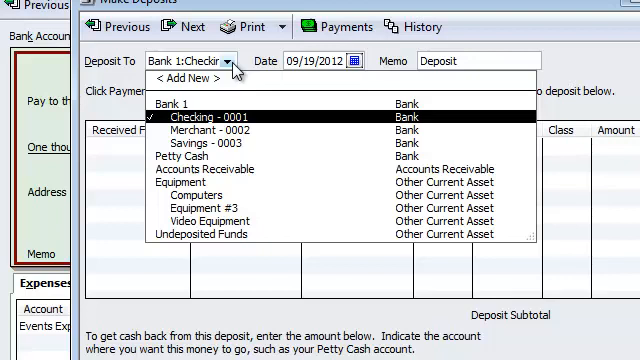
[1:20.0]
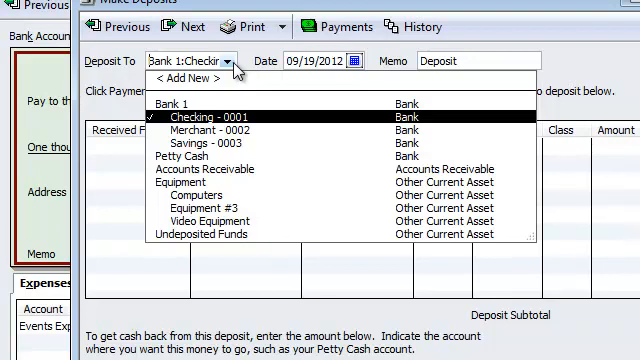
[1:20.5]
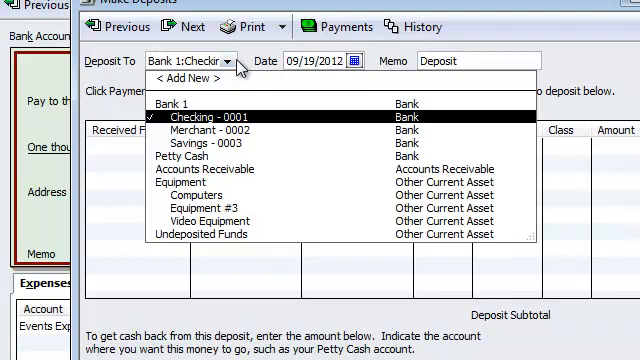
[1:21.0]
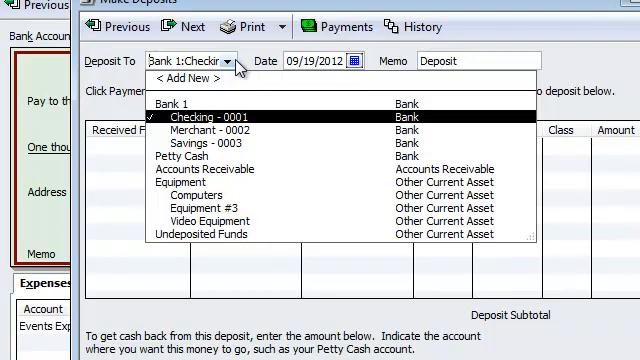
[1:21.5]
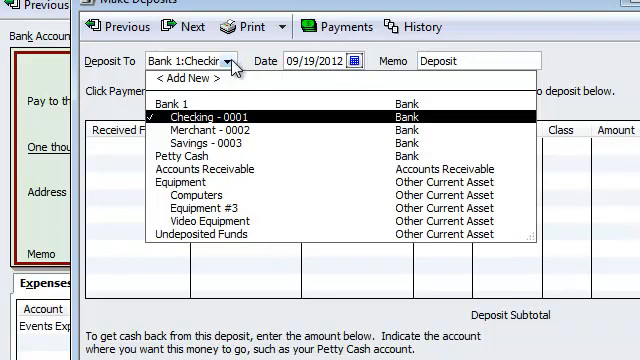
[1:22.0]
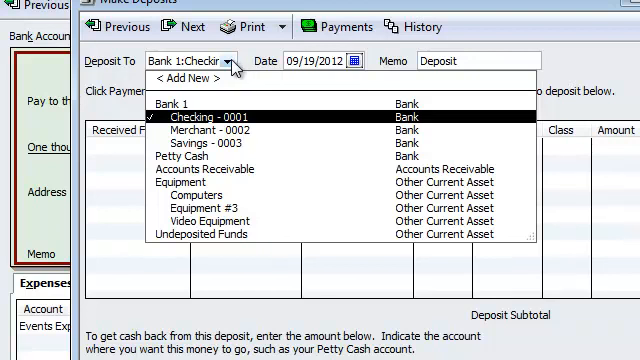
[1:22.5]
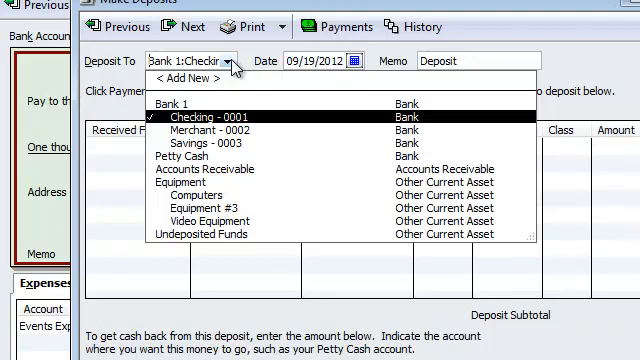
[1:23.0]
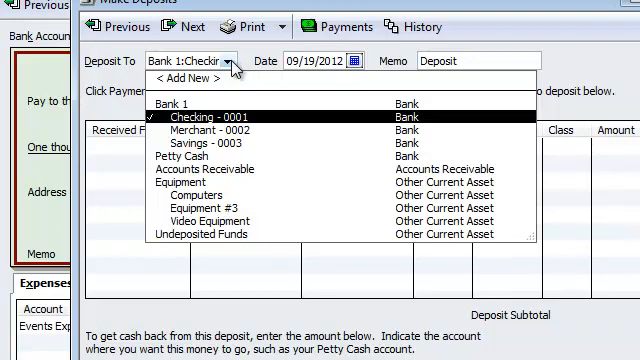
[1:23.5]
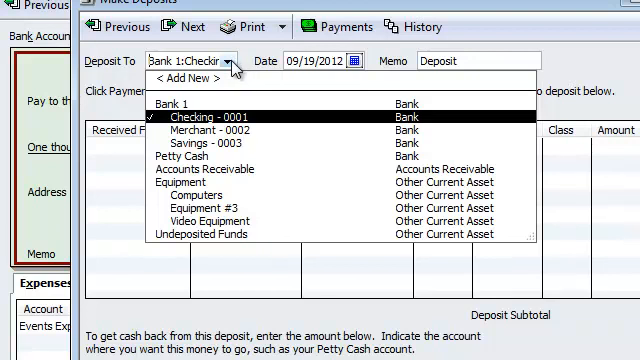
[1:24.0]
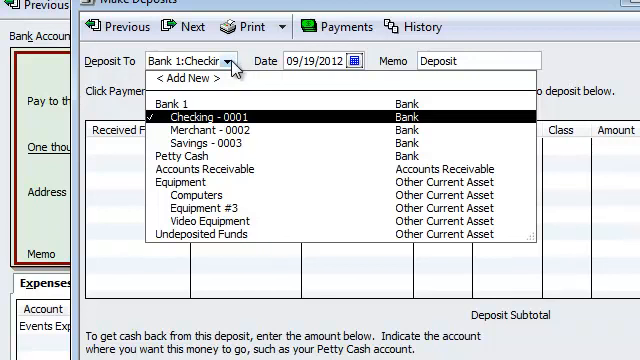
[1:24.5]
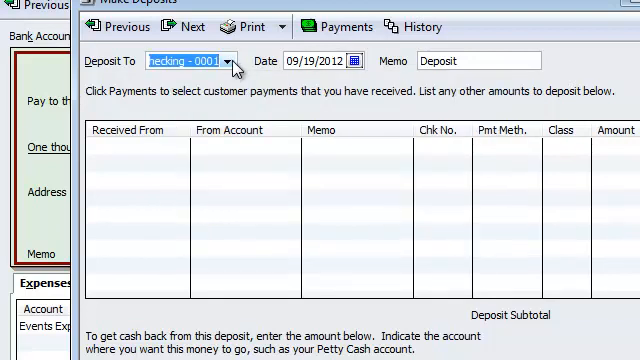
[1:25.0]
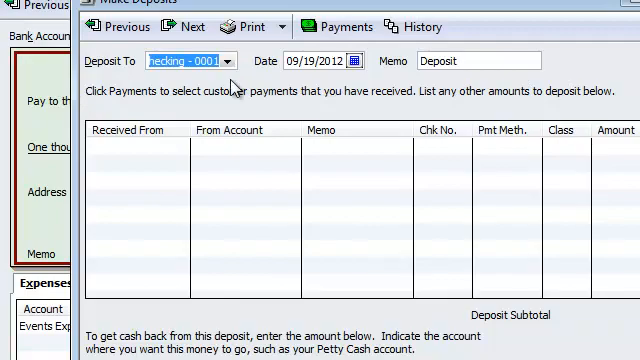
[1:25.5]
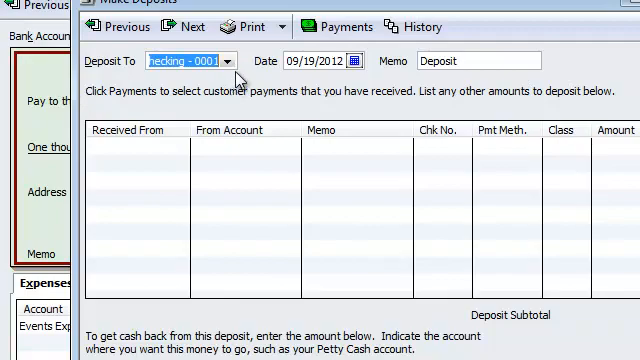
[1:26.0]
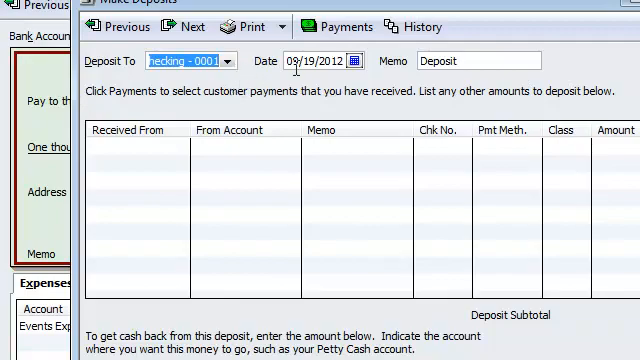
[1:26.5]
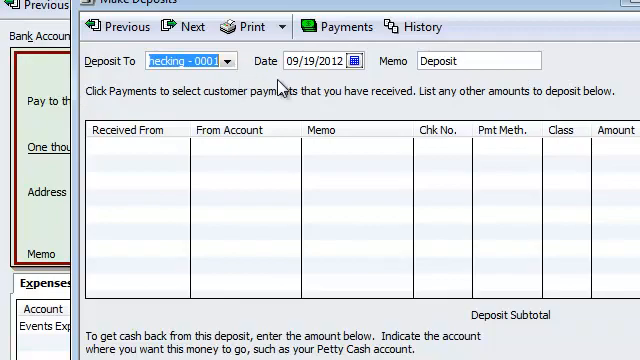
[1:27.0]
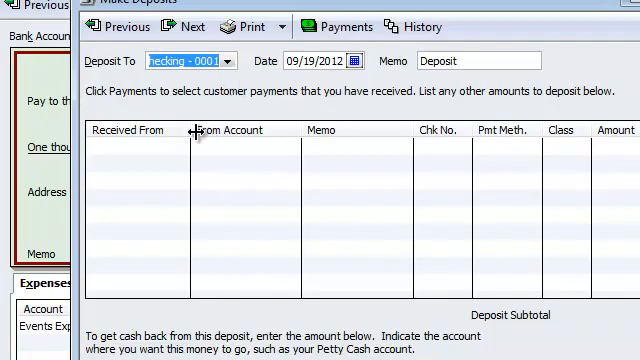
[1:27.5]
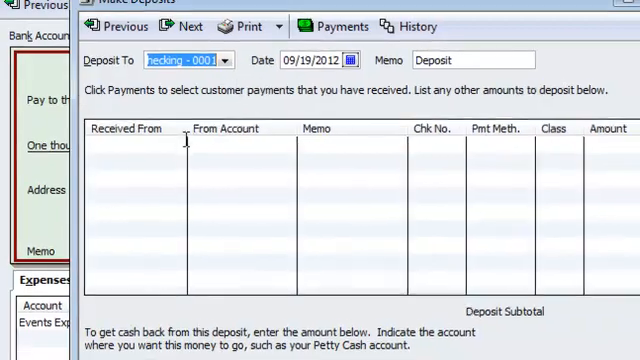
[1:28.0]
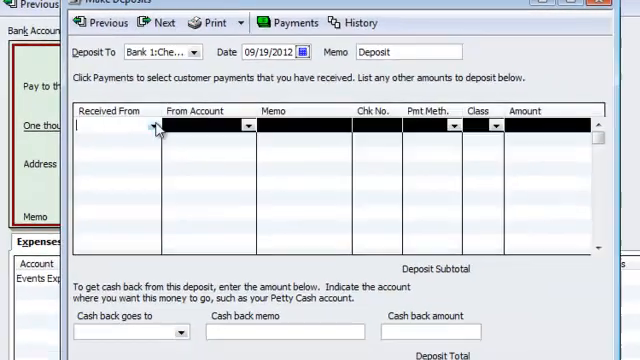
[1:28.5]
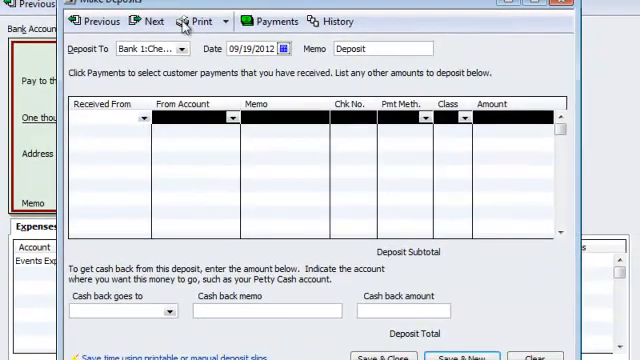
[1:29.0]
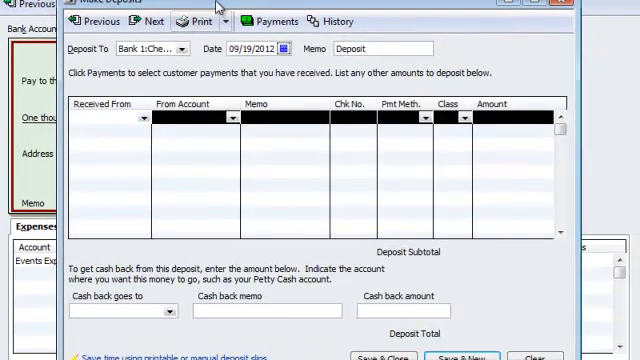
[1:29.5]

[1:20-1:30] In the Make Deposits tab, the user chooses Deposit 2, where the selected option is Bank 1 Checking, and a list of options appears: Bank 1 Checking, Merchant Savings, Petty Cash, Accounts Receivable, Equipment, Video Equipment and On Deposit Funds, grouped under Bank, Accounts Receivable or Other Current Assets. The user leaves the selection as it is and then goes into the table to start editing it, which is not shown.